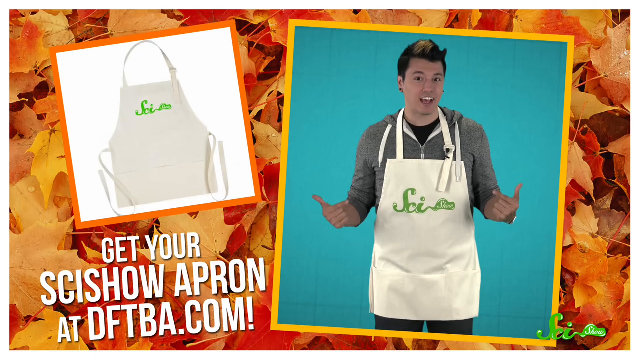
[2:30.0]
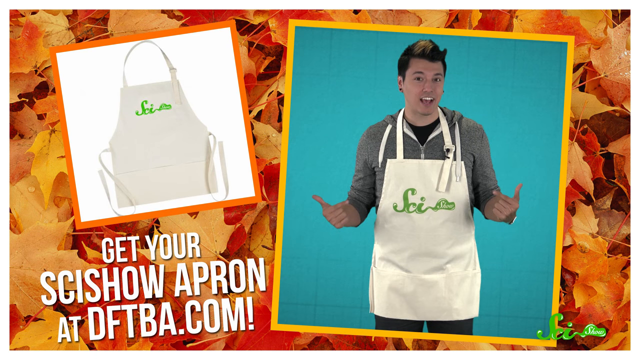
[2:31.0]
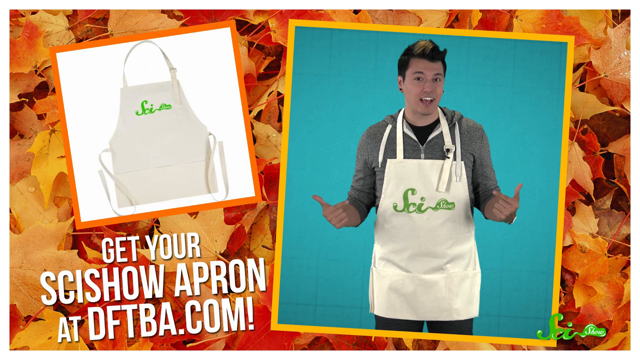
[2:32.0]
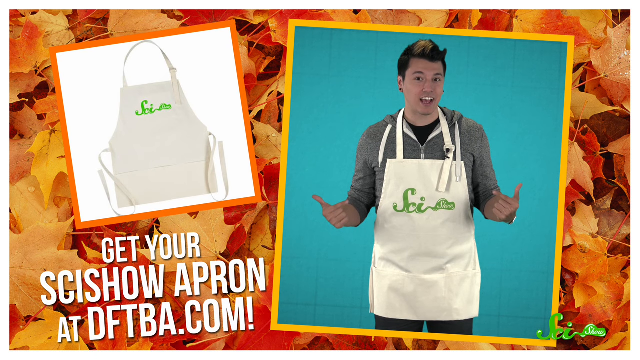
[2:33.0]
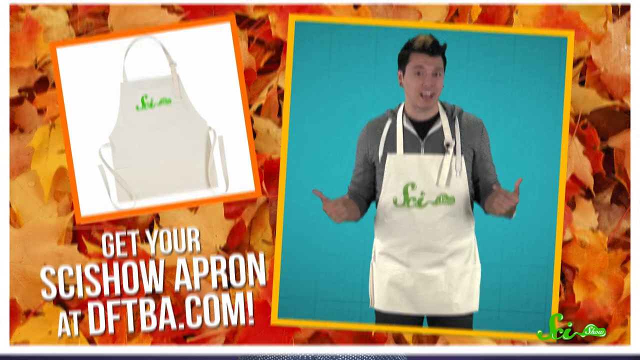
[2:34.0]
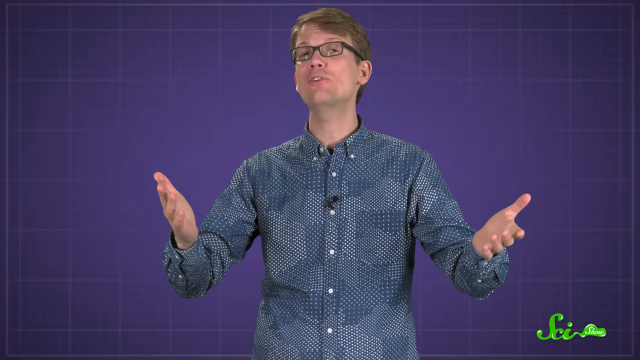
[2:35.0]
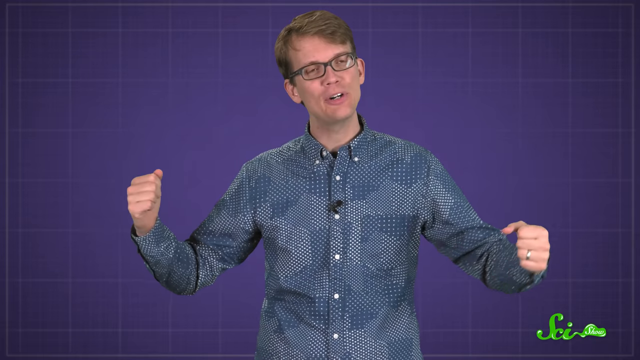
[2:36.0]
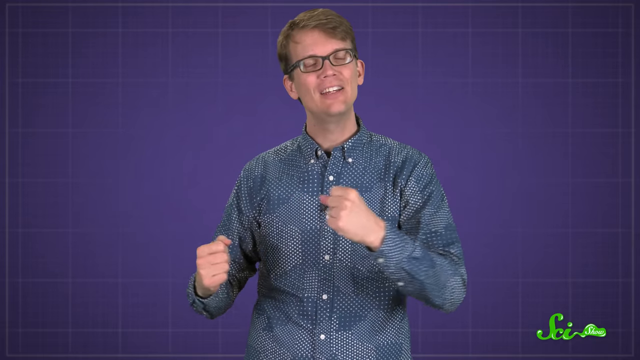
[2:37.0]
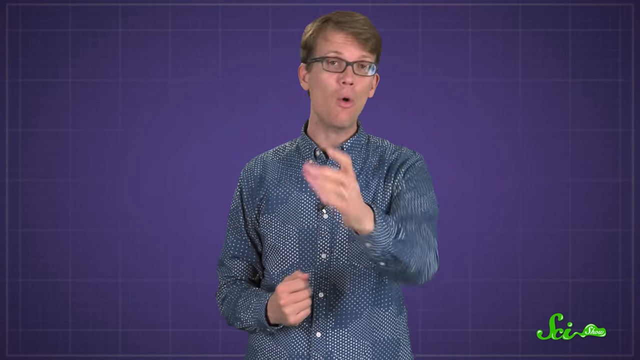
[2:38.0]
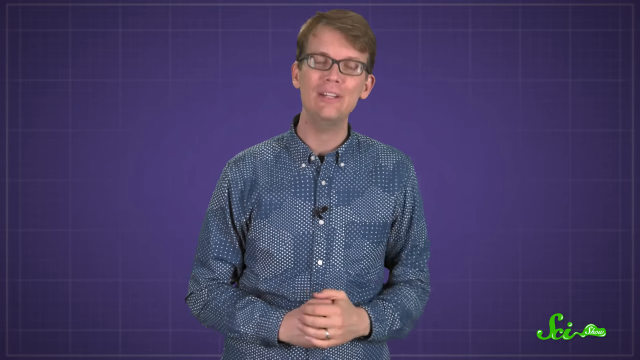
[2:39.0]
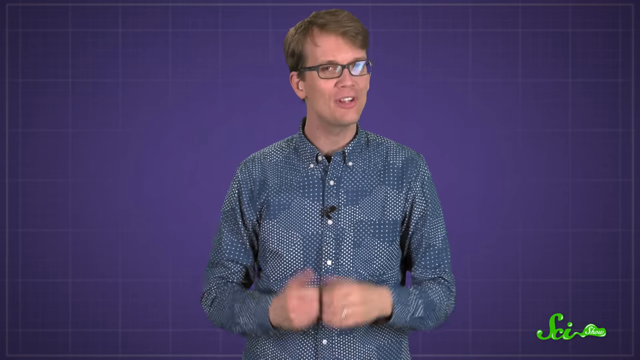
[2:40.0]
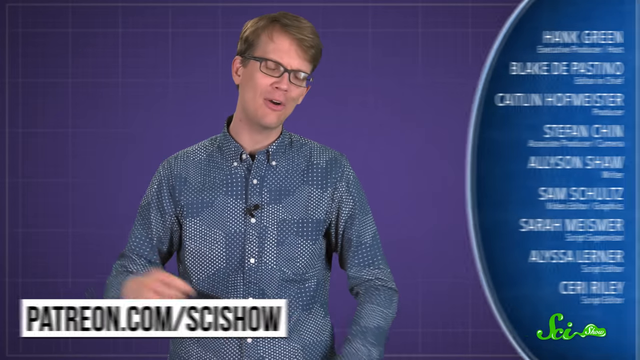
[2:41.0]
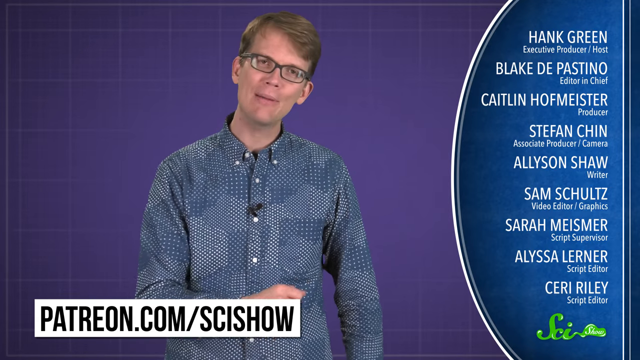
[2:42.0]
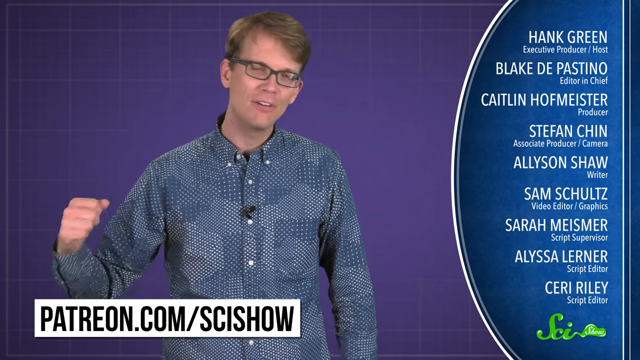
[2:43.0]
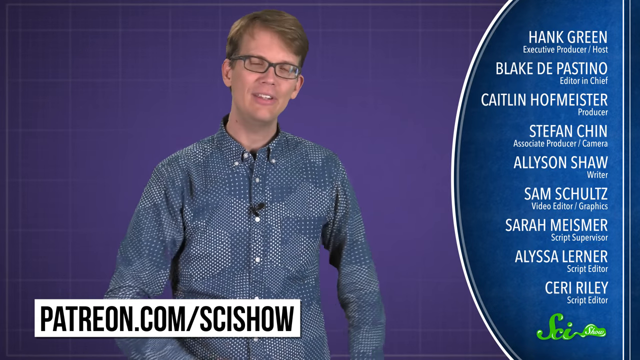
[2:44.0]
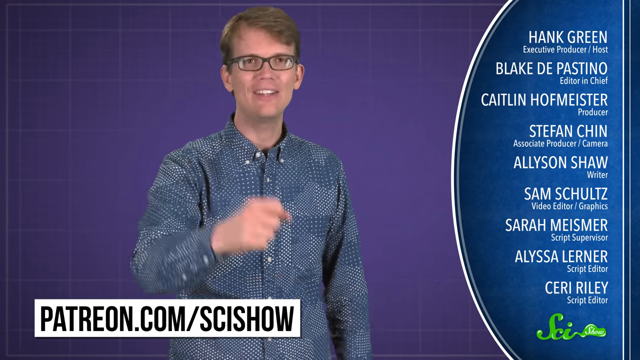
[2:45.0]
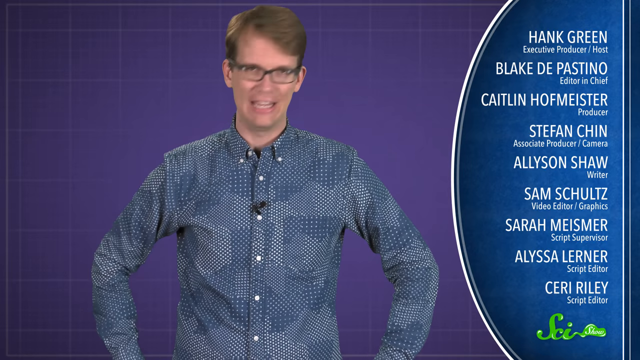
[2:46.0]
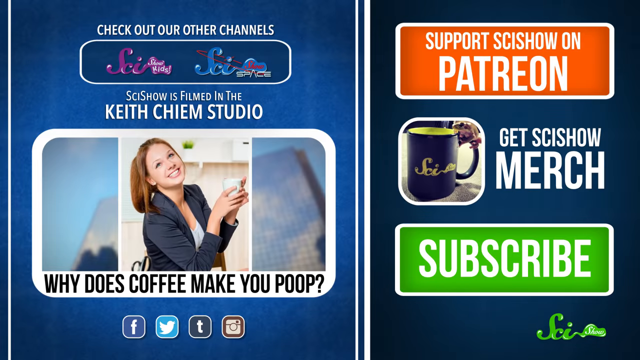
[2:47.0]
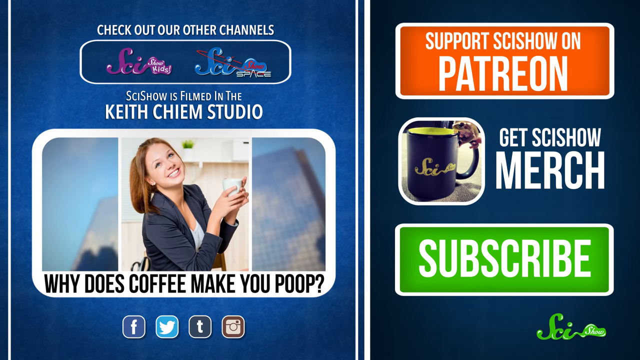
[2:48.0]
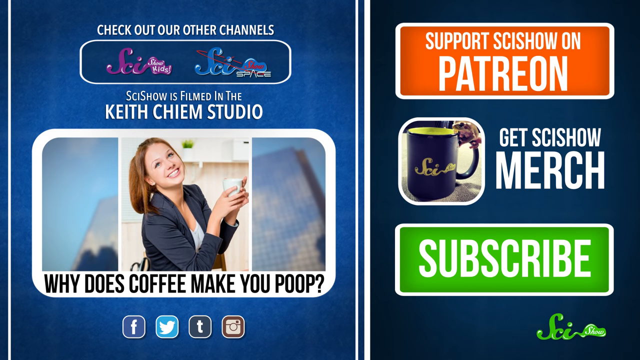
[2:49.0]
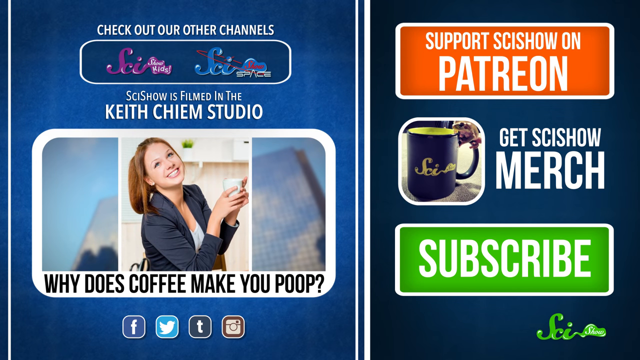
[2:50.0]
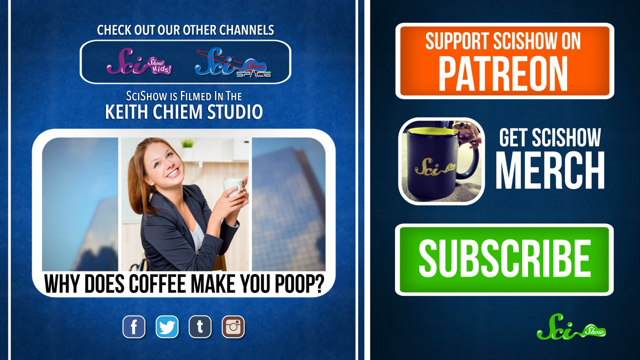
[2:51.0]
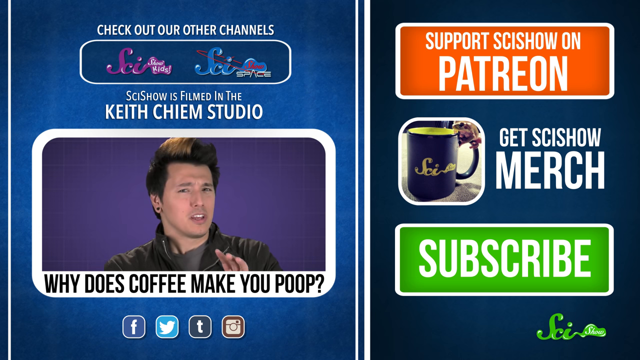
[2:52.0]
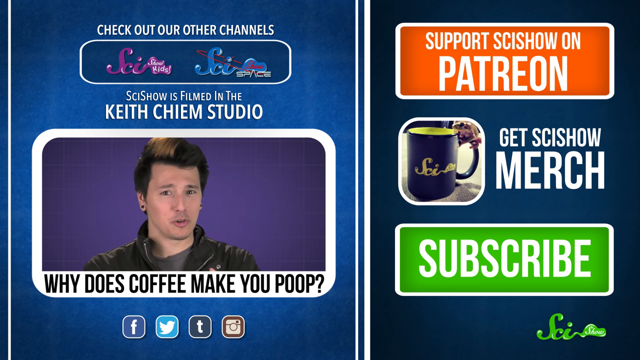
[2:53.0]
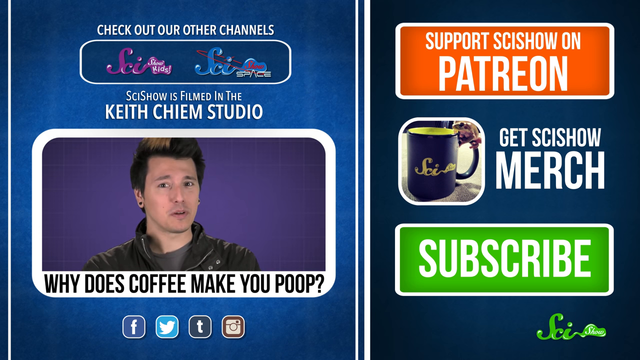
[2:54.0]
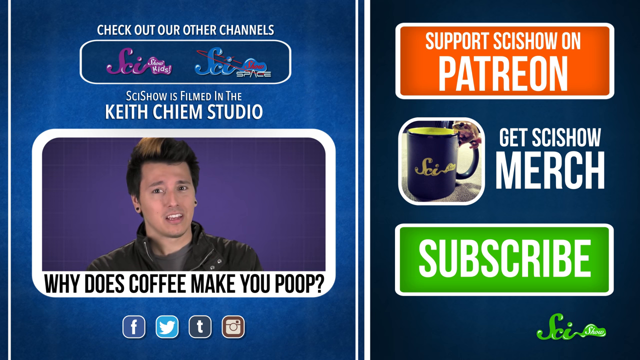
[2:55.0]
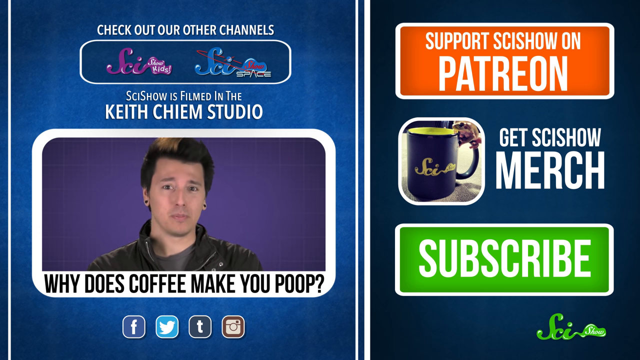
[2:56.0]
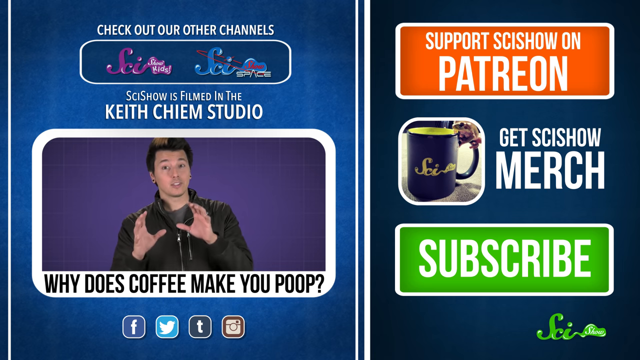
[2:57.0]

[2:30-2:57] The video cuts to what looks like a little ad reading "SciShow" and "get your SciShow apron at dftba.com." An Asian man wears the apron, which is kind of off-white with "SciShow" on it in green. The host talks with his hands again. Text reads "patreon.com/SciShow," and credits on the right list Hank Green, executive producer and host; Blake DePastino, editor-in-chief; Caitlin Hoffmeister, producer; Stephan Chin, associate producer and camera; Allison Shaw, writer; Sam Schultz, video editor and graphics; Sarah Meismer, script supervisor; Alyssa Lerner, script editor; and Sari Reilly, script editor. The talking man is Hank Green, still talking with his hands. Text then reads "support SciShow on Patreon, get SciShow merch, and subscribe."